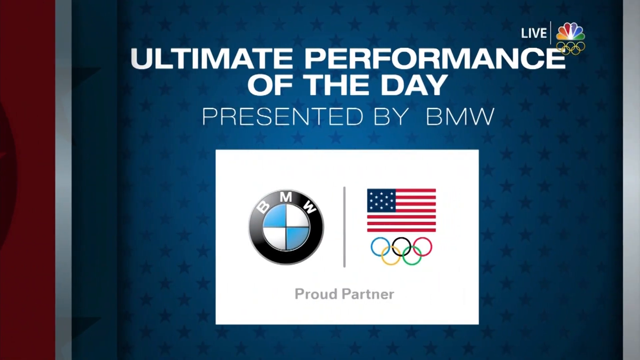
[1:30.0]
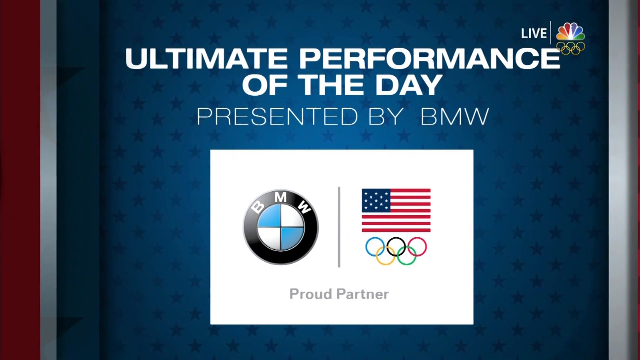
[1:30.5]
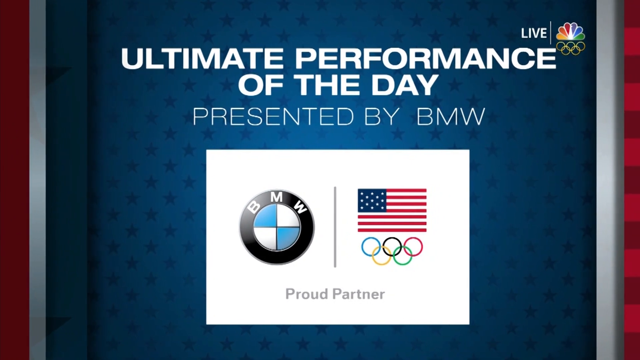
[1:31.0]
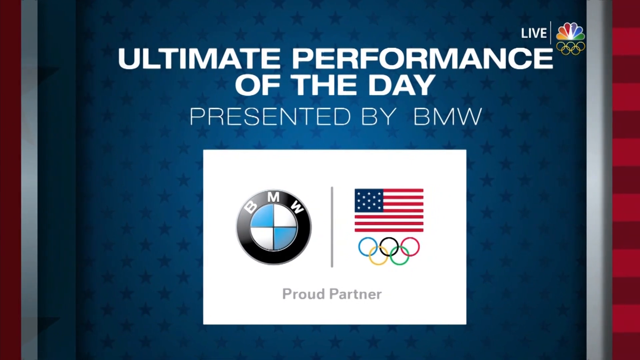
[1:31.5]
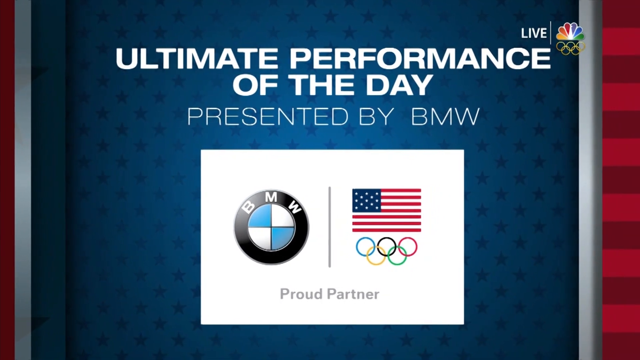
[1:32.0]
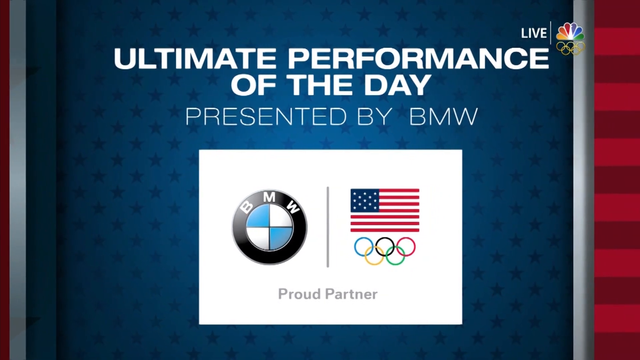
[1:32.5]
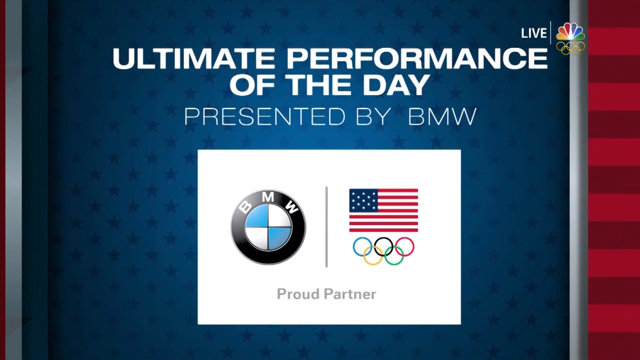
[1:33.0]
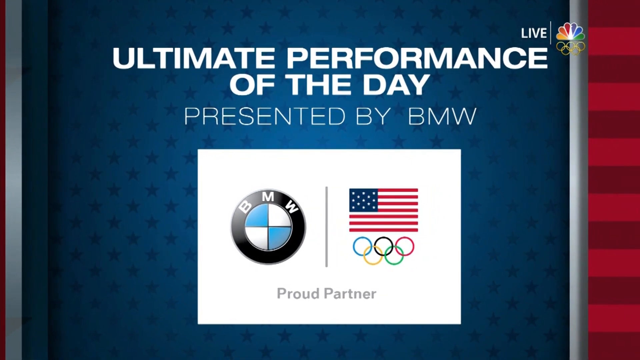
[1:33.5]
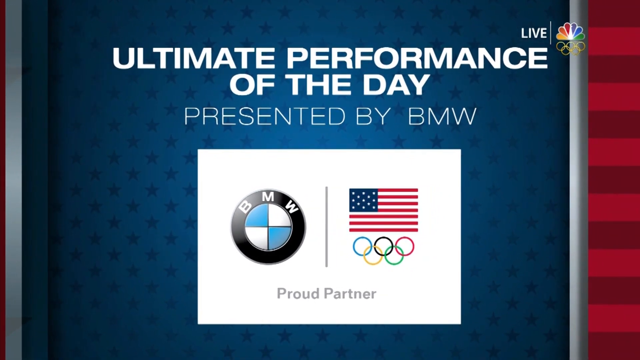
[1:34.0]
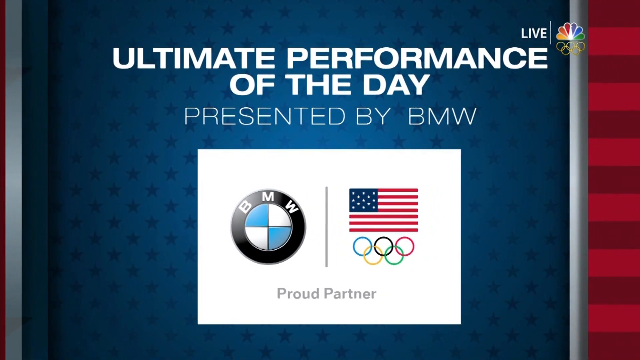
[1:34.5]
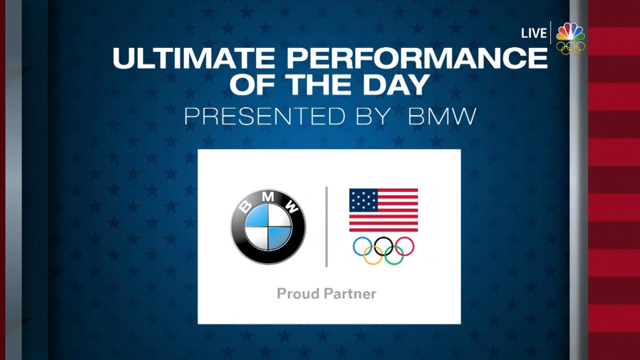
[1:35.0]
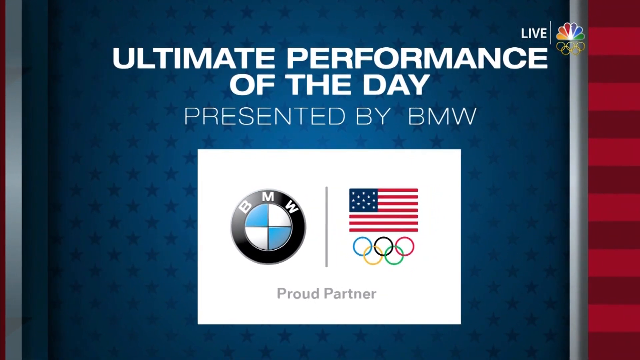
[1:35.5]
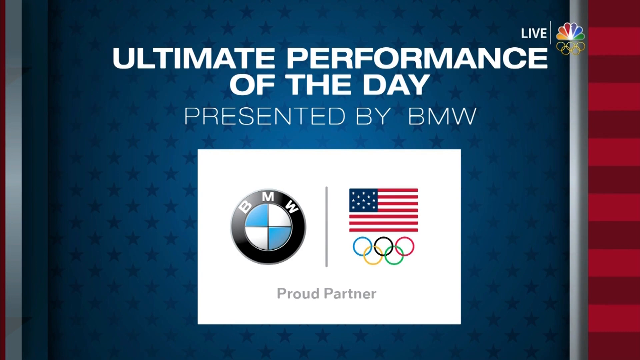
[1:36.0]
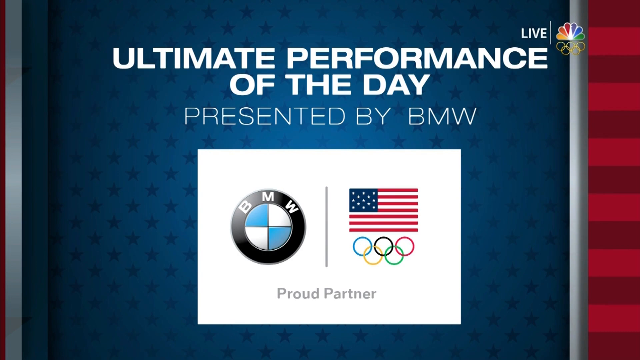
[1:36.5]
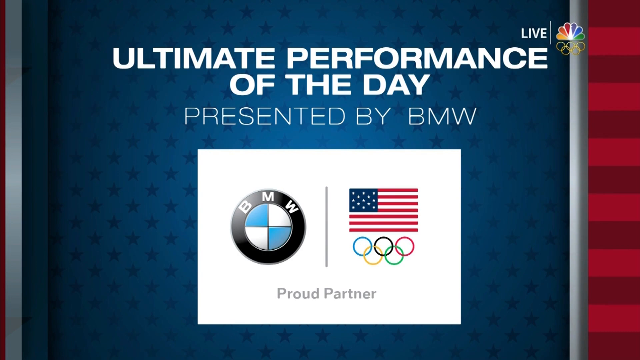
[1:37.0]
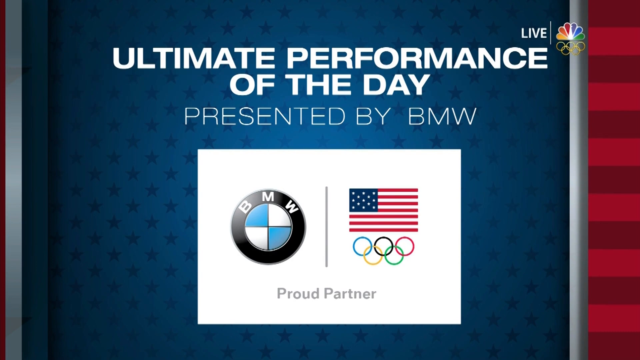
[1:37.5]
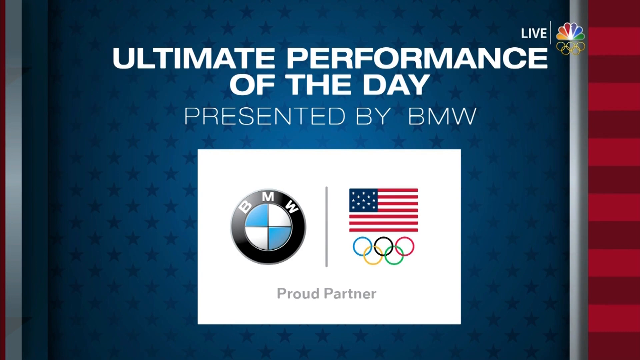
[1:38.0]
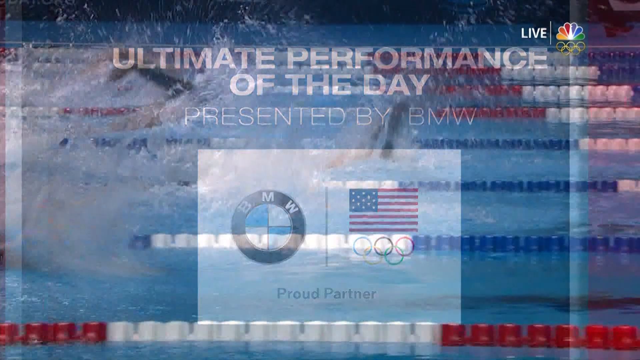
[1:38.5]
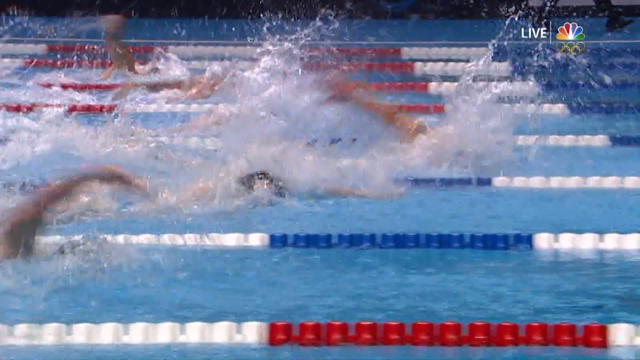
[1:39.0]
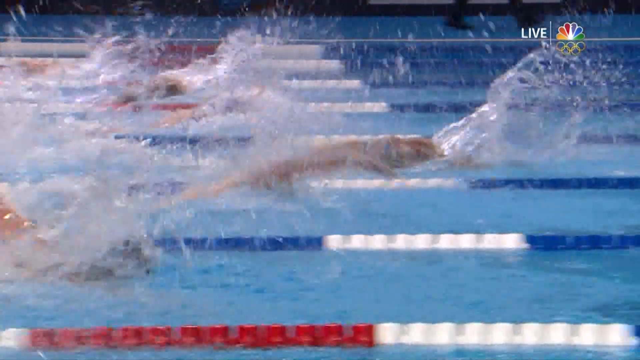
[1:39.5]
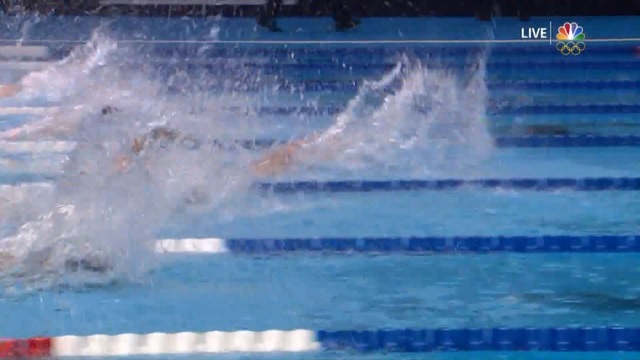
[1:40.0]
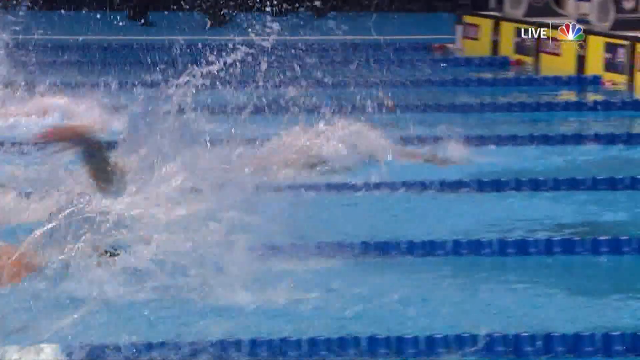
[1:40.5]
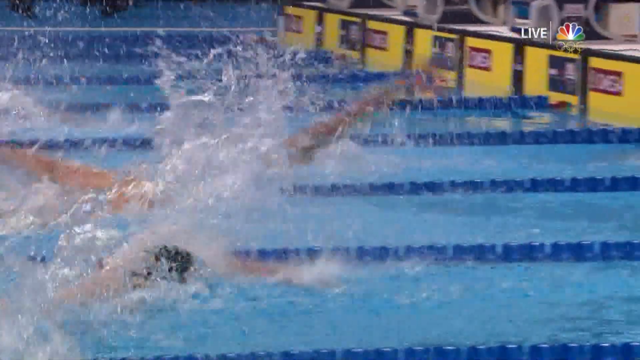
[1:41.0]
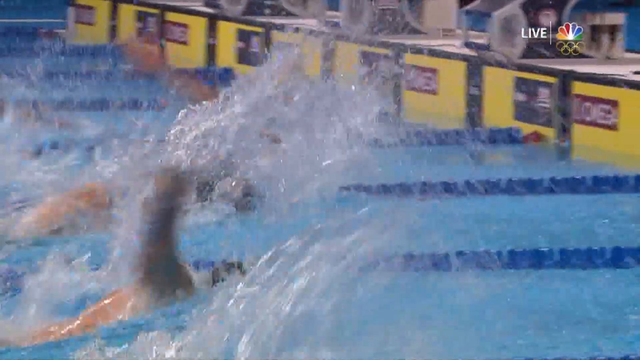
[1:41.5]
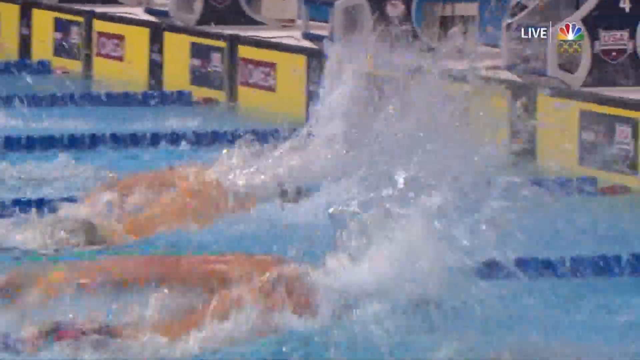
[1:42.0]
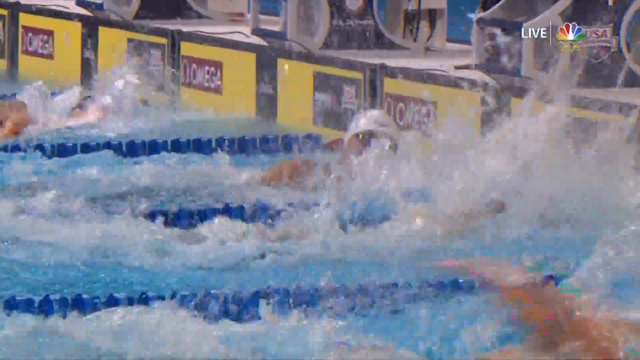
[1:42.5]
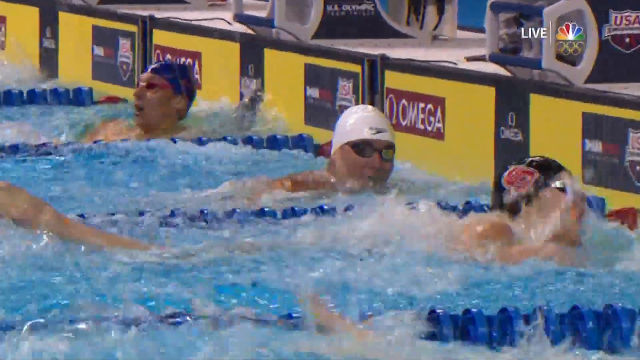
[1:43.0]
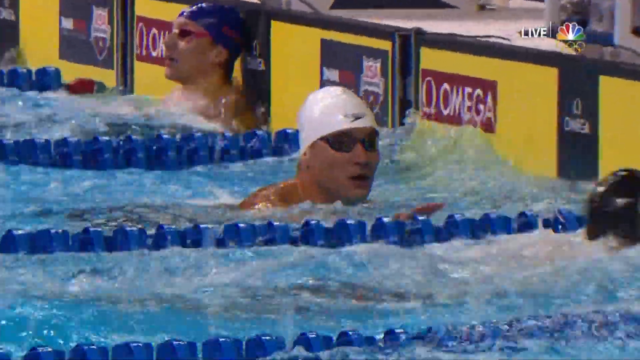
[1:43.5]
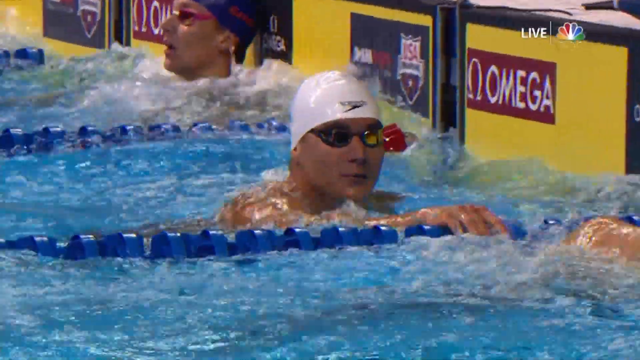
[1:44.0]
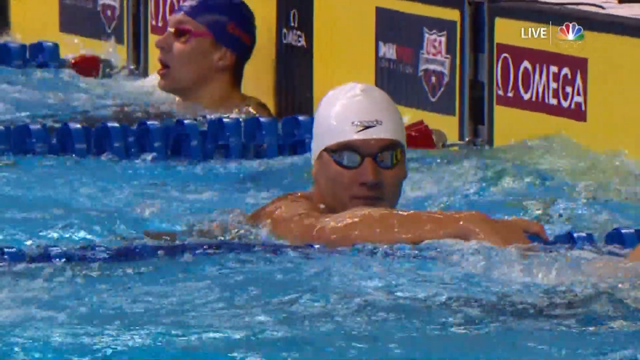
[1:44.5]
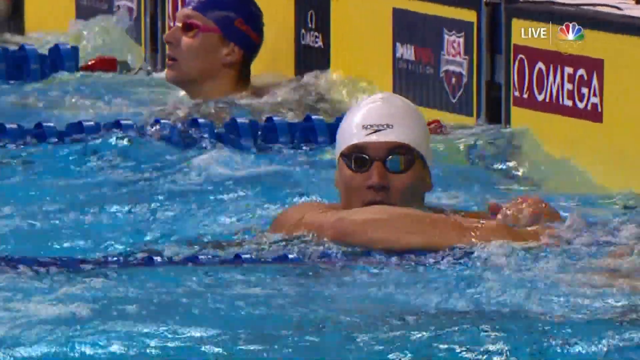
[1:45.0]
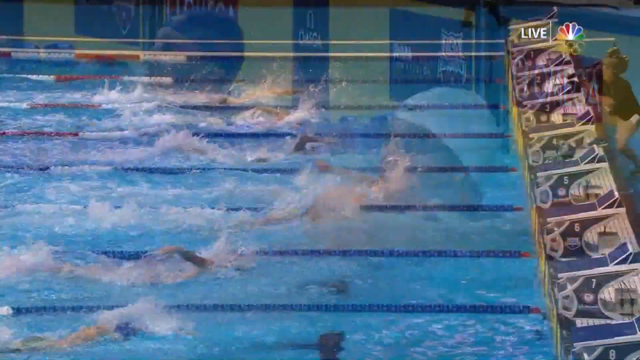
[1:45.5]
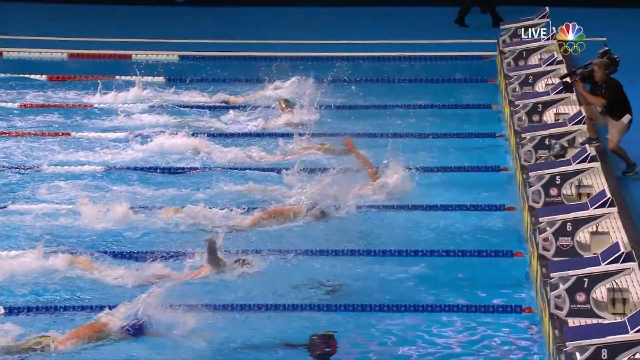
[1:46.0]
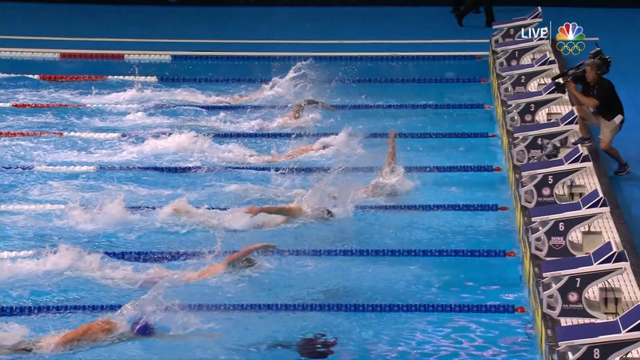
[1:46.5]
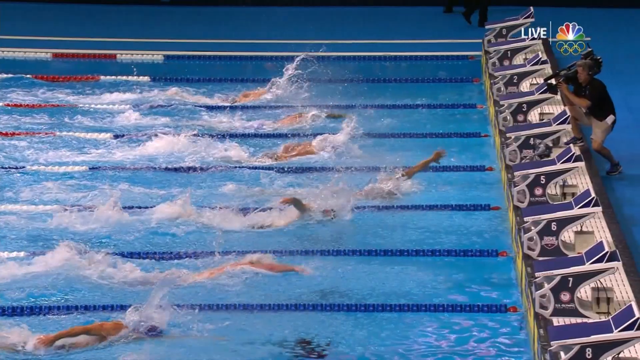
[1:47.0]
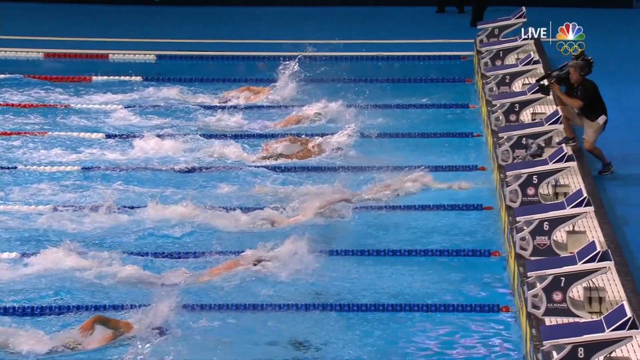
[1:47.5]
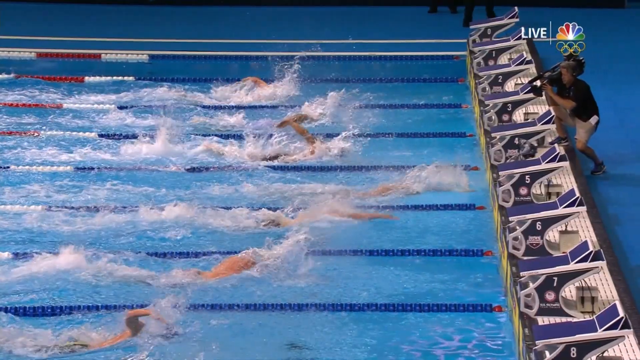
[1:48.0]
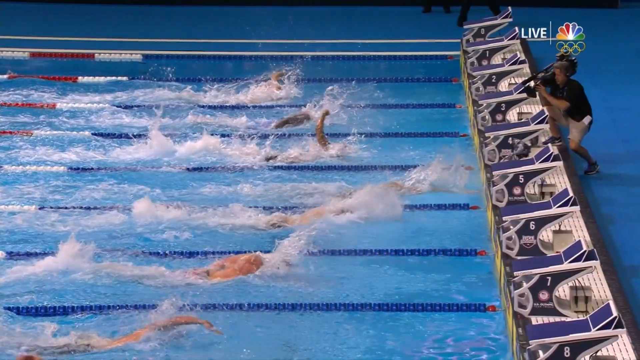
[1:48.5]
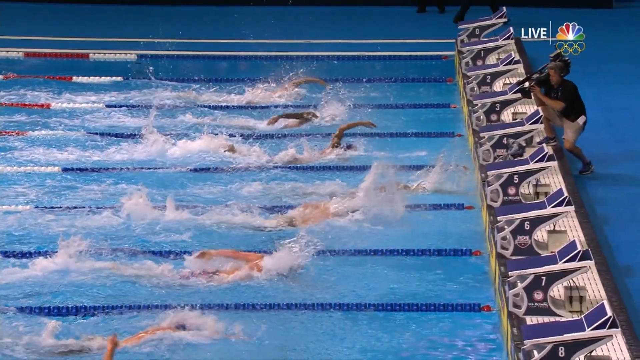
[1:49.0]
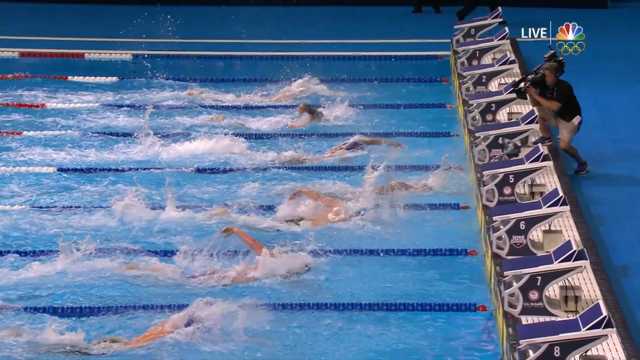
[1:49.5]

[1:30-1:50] The sponsor display shows BMW, the United States flag and an Olympic flag. Above the display, white capital text reads "ultimate performance of the day. Presented by BMW." Below the United States flag and the BMW logo, grey text reads "proud partner". A slow-motion replay shows the swimmers approaching the finish, with a close-up of the winner in a white swim cap and black goggles. The slow-motion replay continues as the winner stretches out his hand to touch the end wall of the pool.